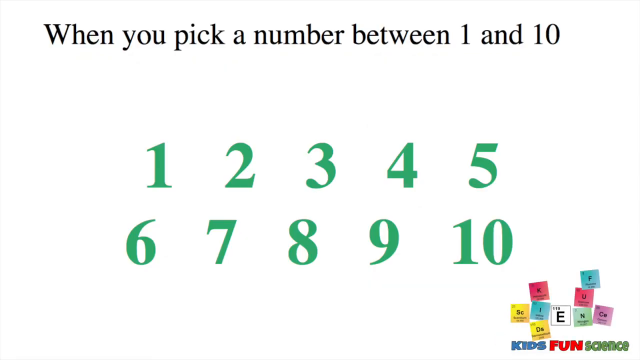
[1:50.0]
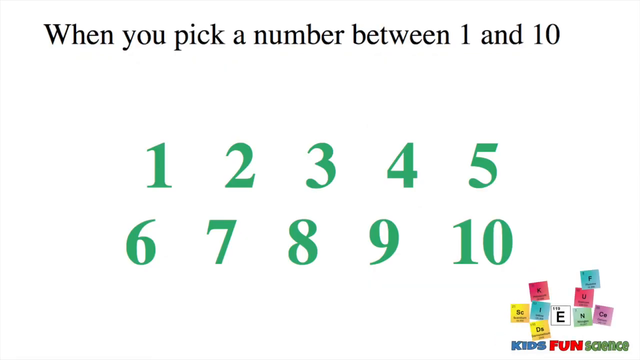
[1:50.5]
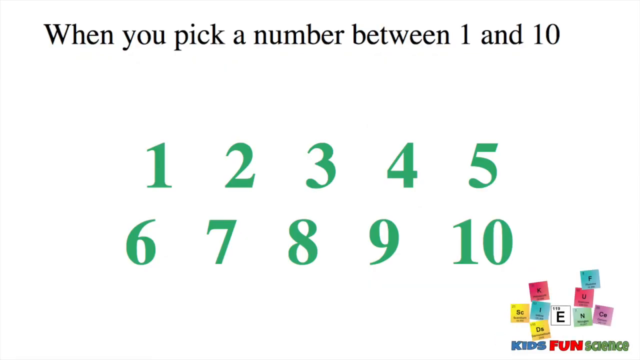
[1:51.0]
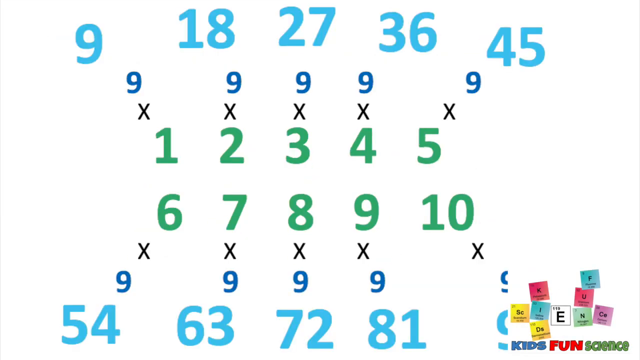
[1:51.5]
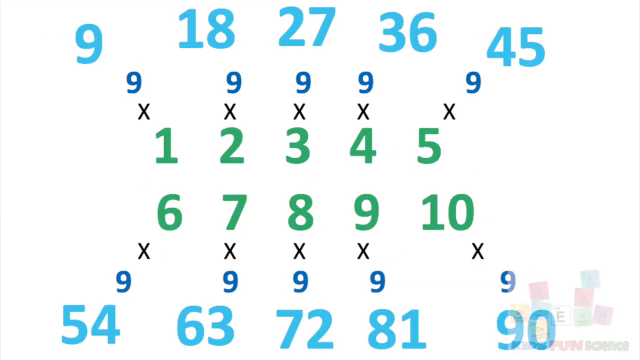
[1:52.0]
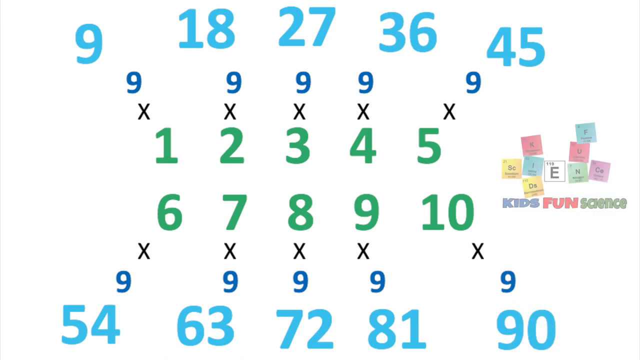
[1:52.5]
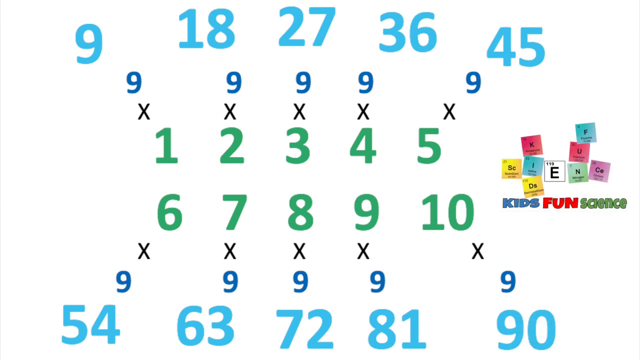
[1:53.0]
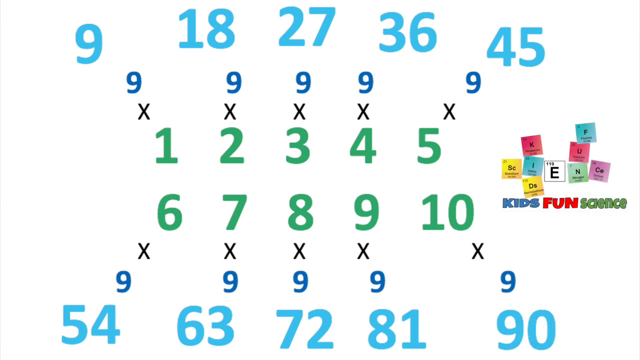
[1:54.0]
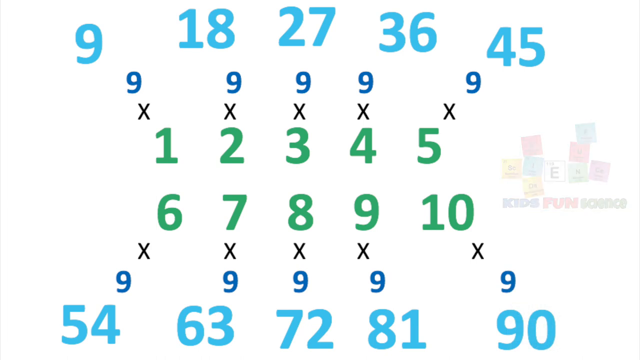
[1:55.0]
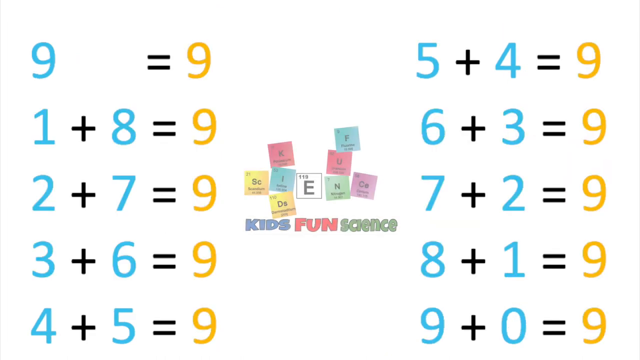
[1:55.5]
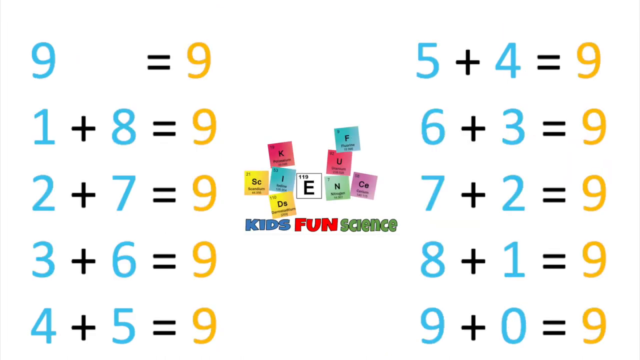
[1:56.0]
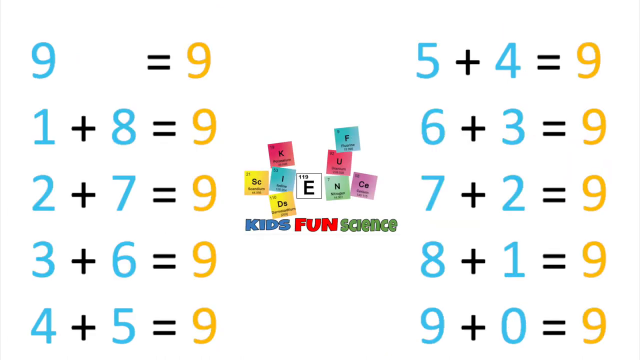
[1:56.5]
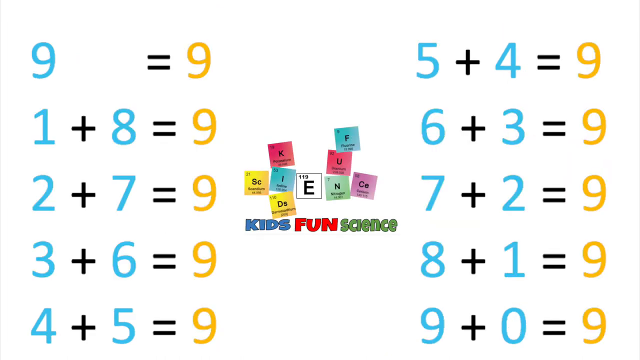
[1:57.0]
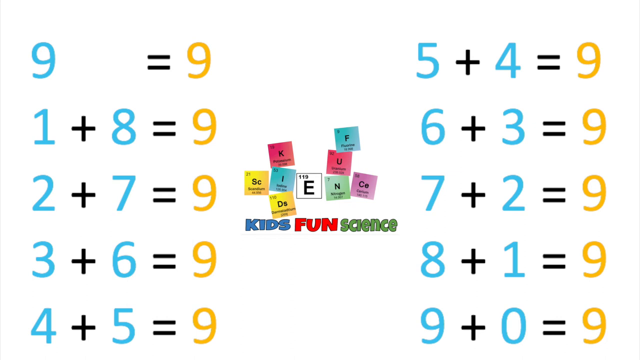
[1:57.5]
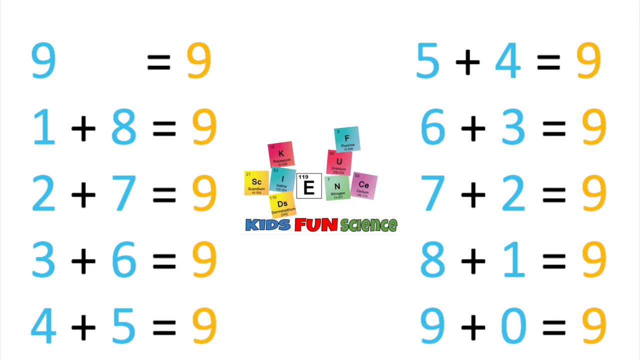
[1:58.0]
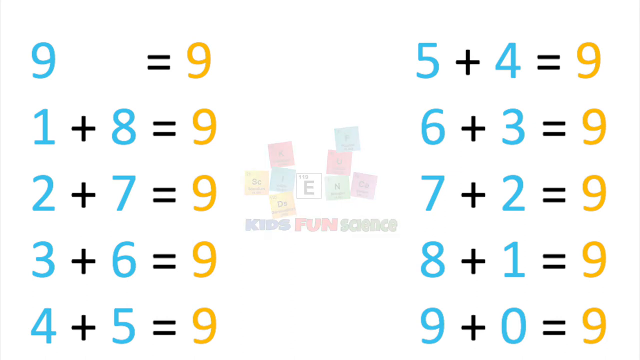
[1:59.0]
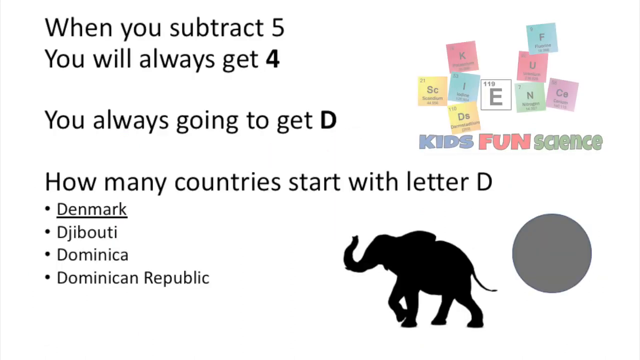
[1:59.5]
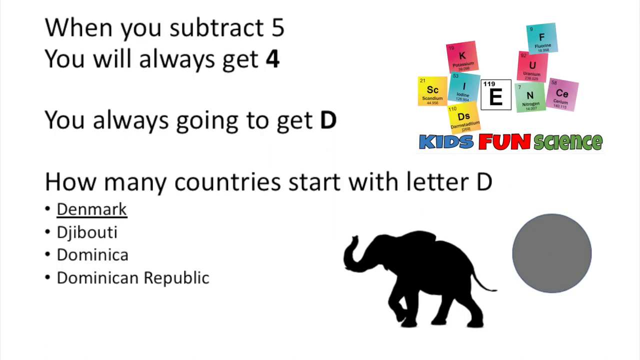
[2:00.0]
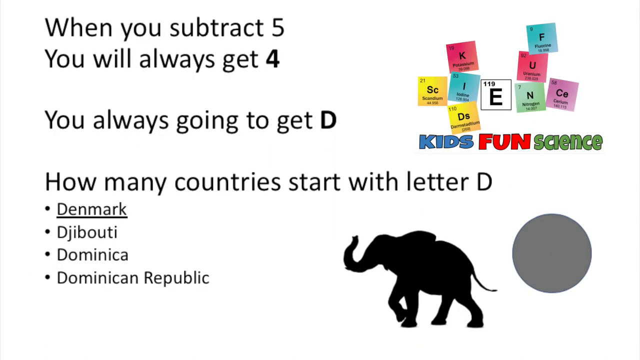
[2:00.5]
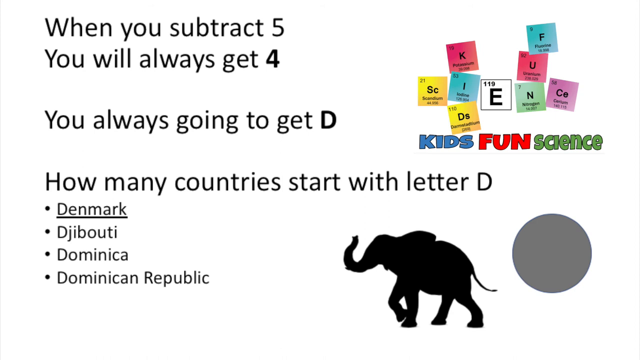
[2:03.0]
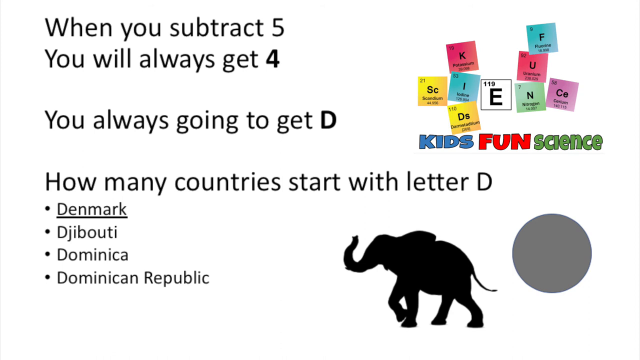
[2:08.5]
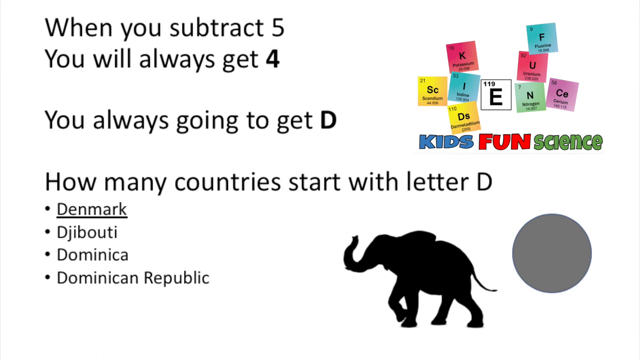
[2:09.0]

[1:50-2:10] The screen reads "When you pick a number between 1 and 10" with the numbers 1 through 10, then shows numeric equations with every number multiplied by nine, such as 4 times 9 is 36, 3 times 9 is 27, and 2 times 9 is 18. The next screen shows sums that all equal 9: 1 plus 8, 2 plus 7, 3 plus 6, 4 plus 5, 5 plus 4, 6 plus 3, 7 plus 2, 8 plus 1, and 9 plus 0. Text then reads "When you subtract 5, you will always get 4," followed by a question about how many countries start with the letter D and the list "Denmark, Djibouti, Dominica, Dominican Republic."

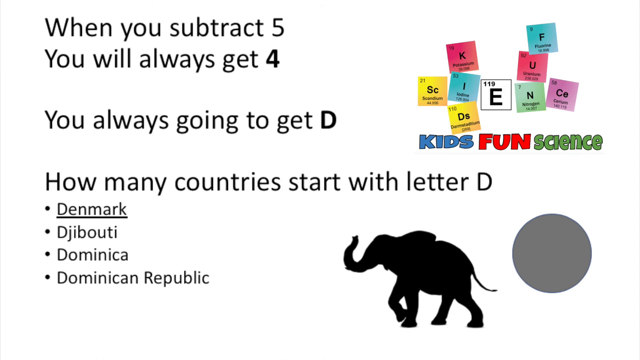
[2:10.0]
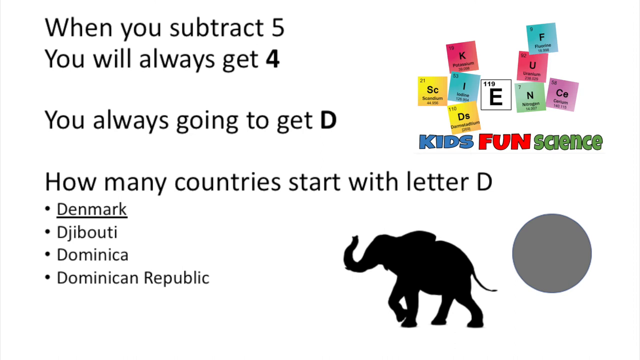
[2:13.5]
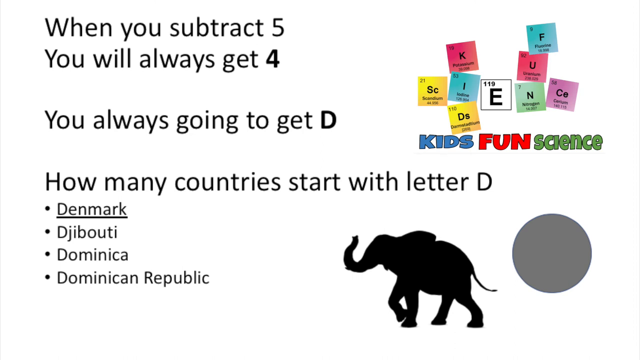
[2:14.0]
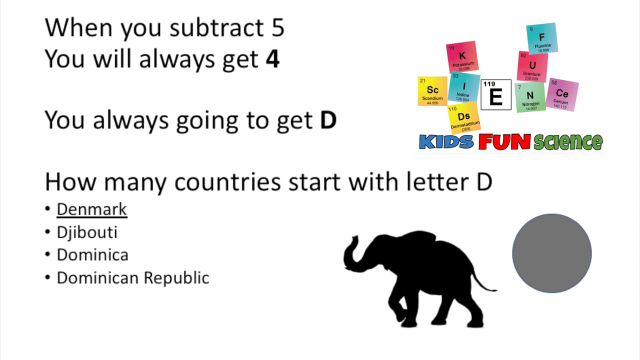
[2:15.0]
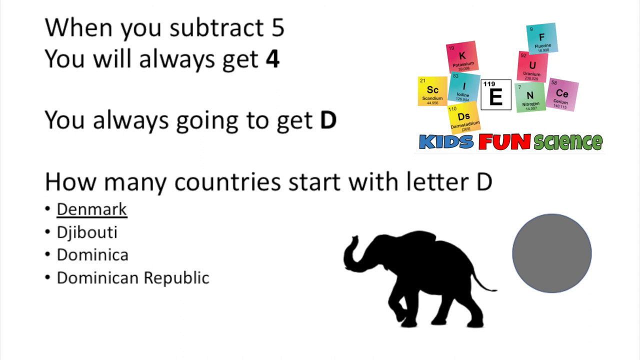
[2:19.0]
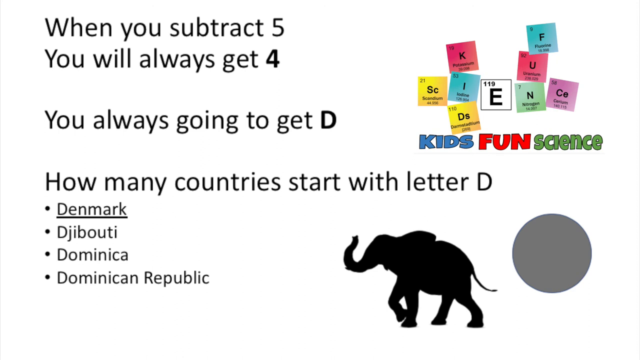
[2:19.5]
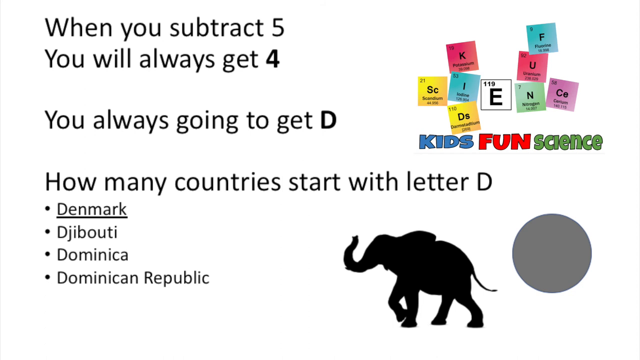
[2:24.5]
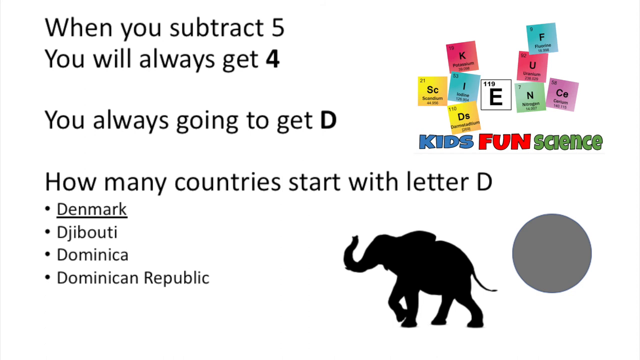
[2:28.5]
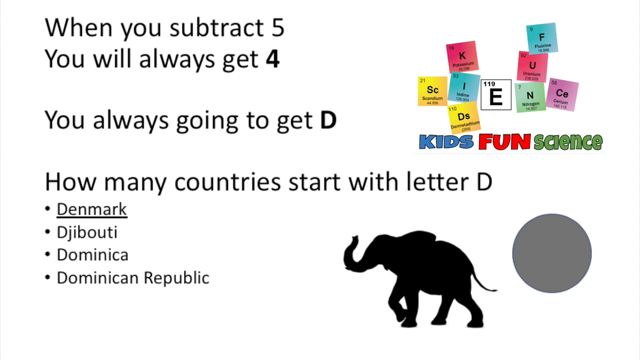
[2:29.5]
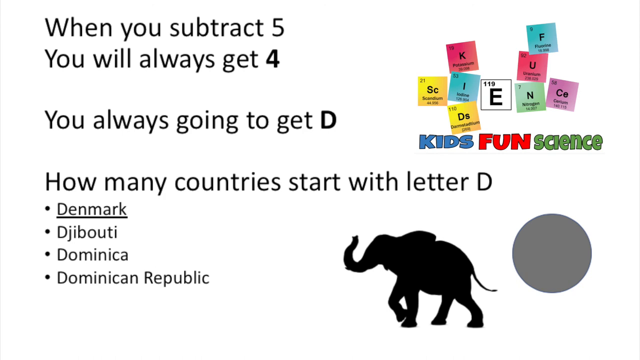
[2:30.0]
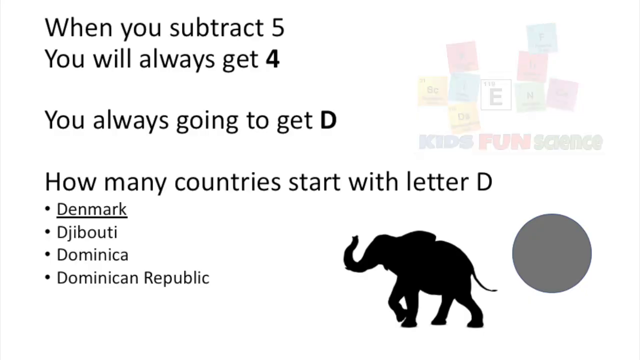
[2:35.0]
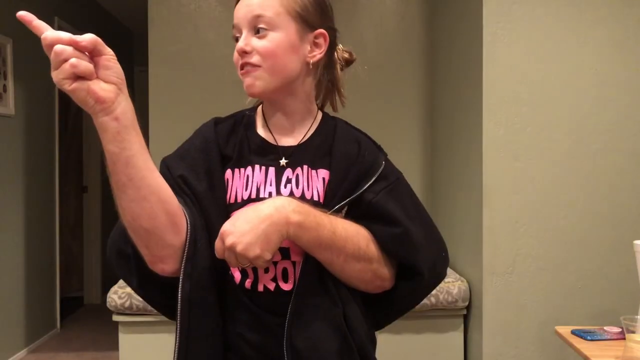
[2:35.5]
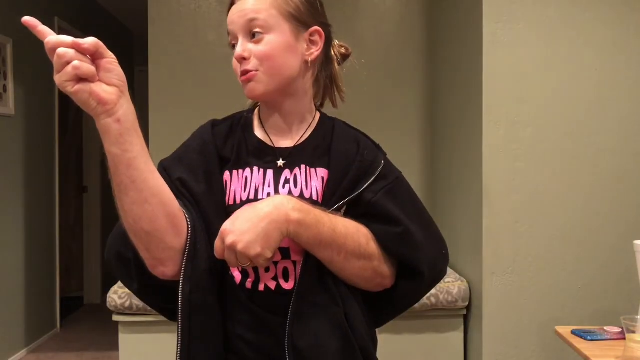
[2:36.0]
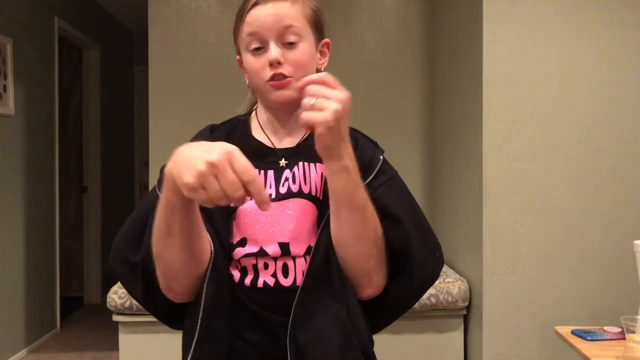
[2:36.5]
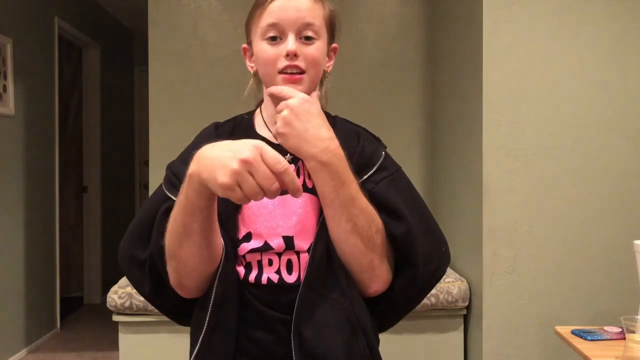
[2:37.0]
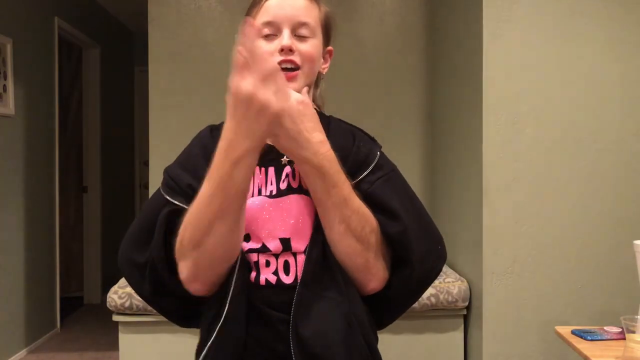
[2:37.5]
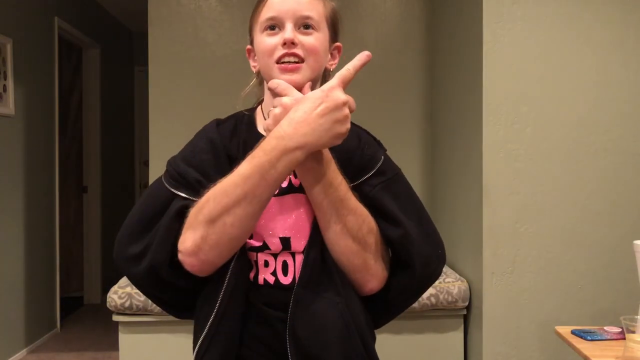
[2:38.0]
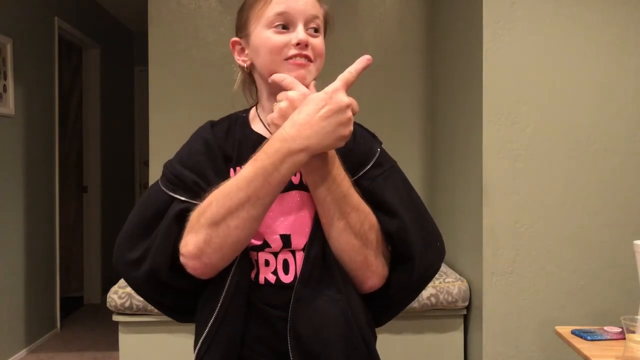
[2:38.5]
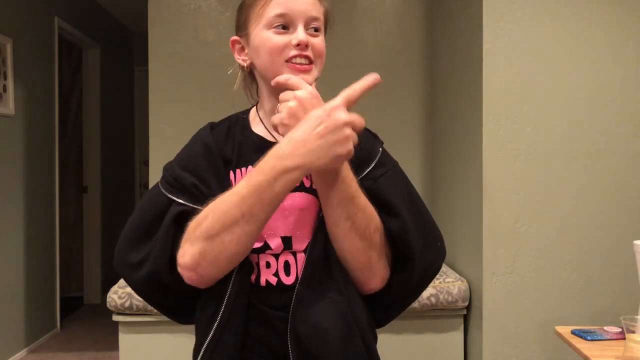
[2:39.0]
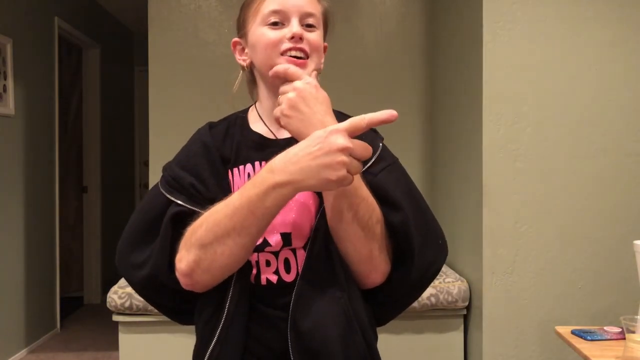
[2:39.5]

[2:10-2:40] Text reads "When you subtract 5, you will always get 4. You always going to get D. How many countries start with letter D? Denmark, Djibouti, Dominica, Dominican Republic," and a gray elephant appears. Then what looks like a young girl in a black sweatshirt appears, smiling. Hands that are not hers come out of a jacket so they appear to be hers. She laughs as the hands move her face and her hand, point, and do all kinds of funny things, joking around and playing with her. The arms look like a male's, muscular, and the hands are pretty big, clearly too big to be her own.